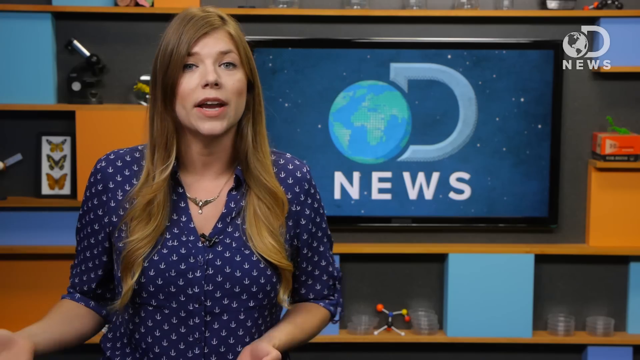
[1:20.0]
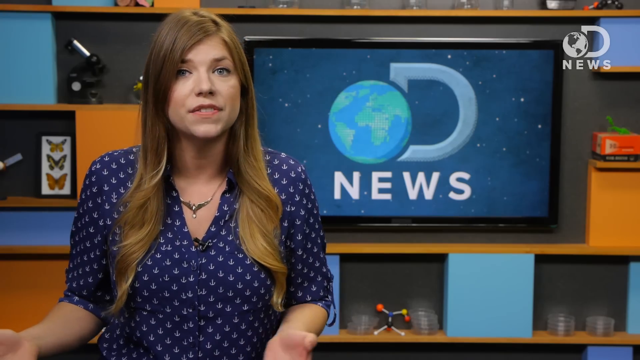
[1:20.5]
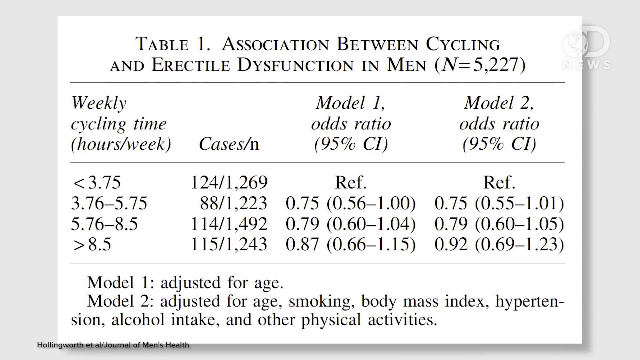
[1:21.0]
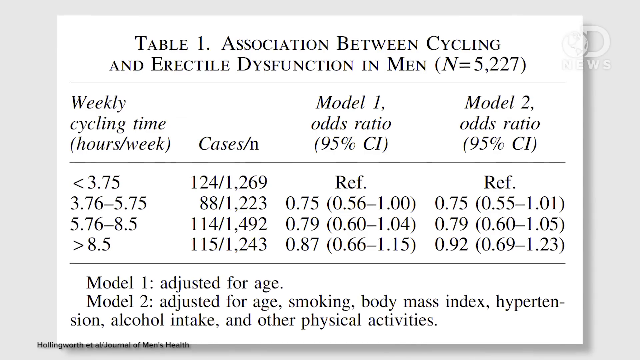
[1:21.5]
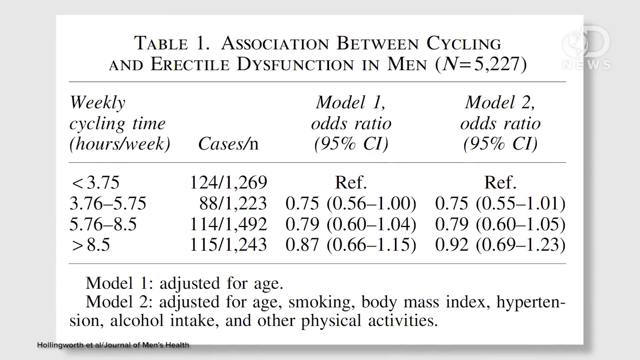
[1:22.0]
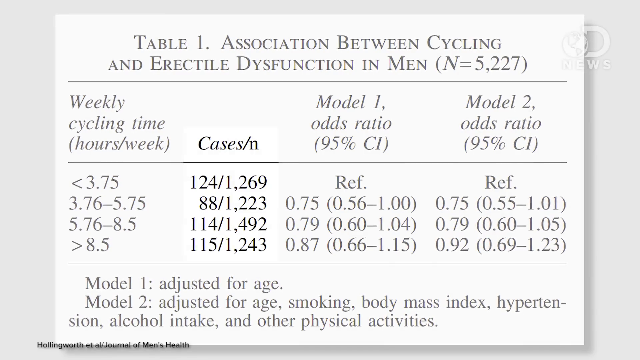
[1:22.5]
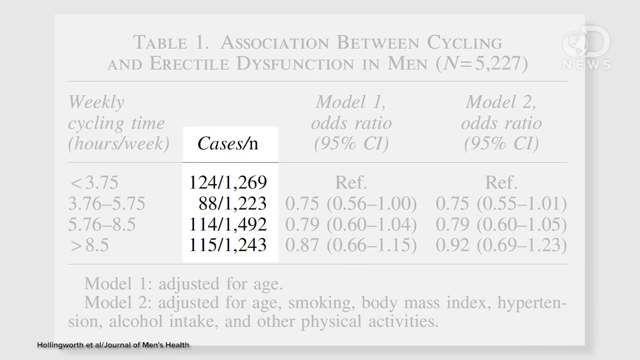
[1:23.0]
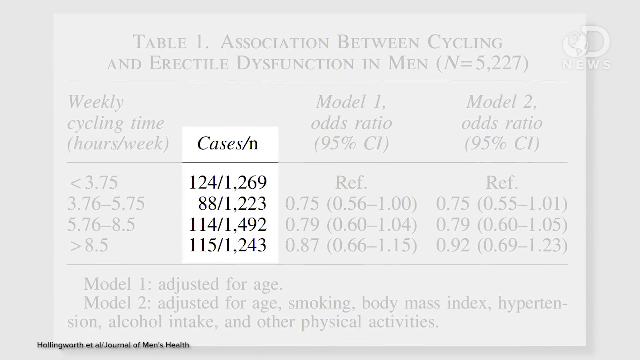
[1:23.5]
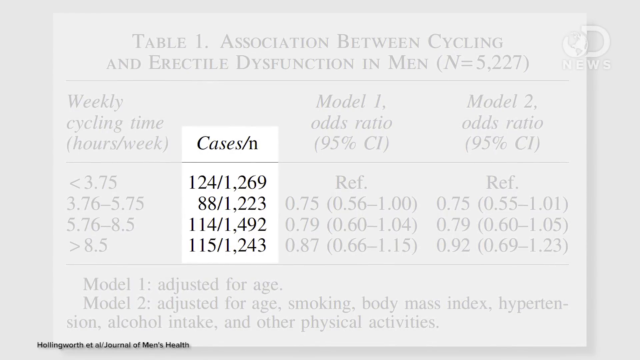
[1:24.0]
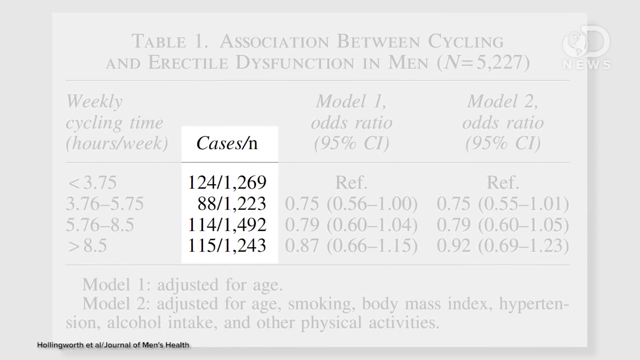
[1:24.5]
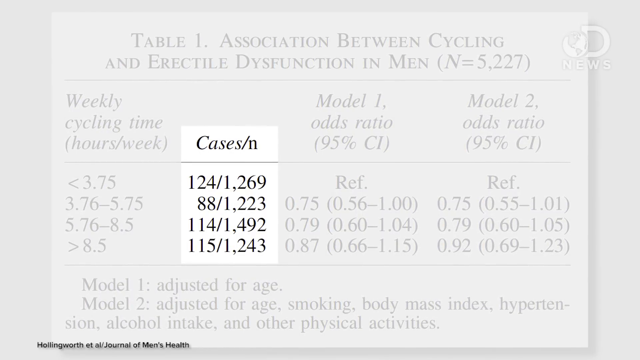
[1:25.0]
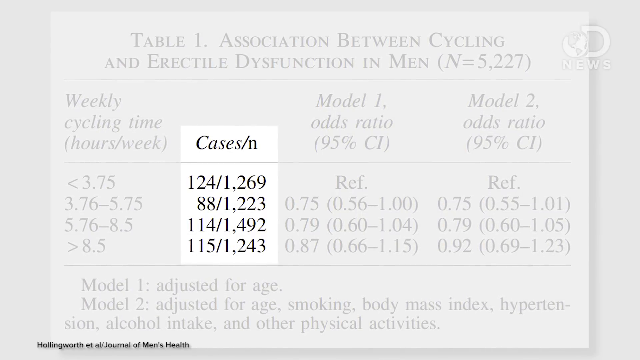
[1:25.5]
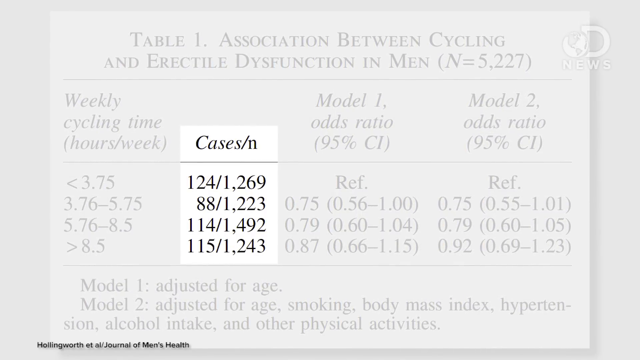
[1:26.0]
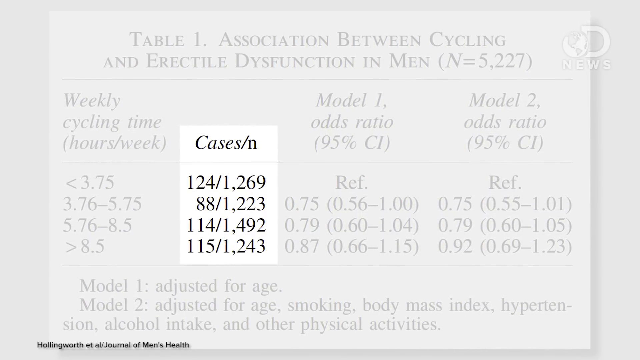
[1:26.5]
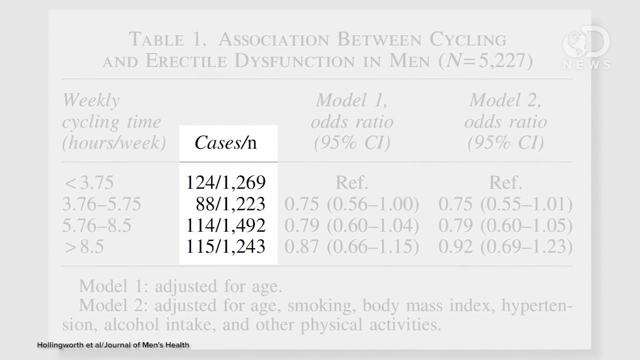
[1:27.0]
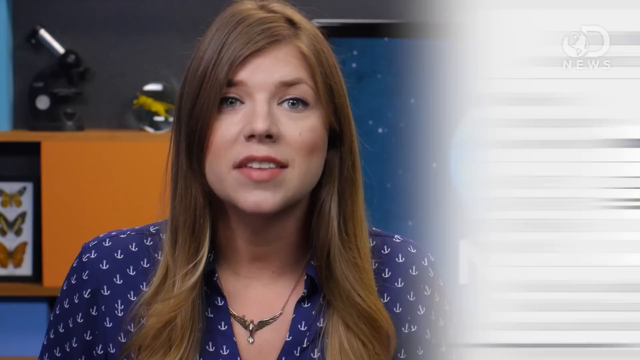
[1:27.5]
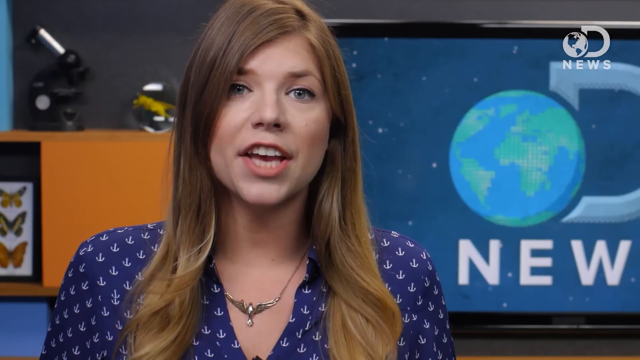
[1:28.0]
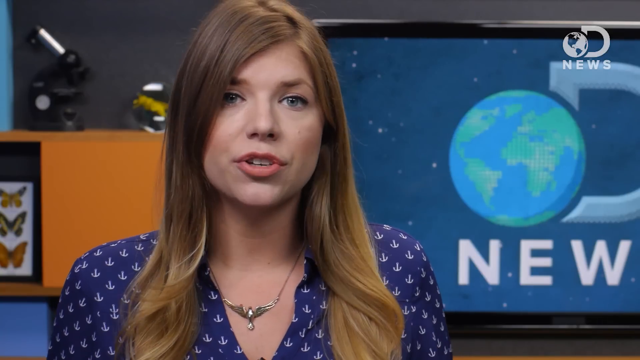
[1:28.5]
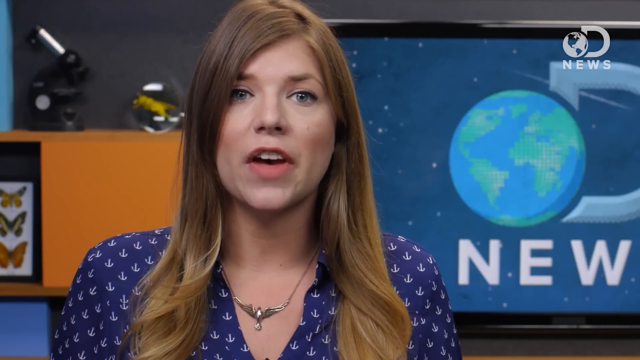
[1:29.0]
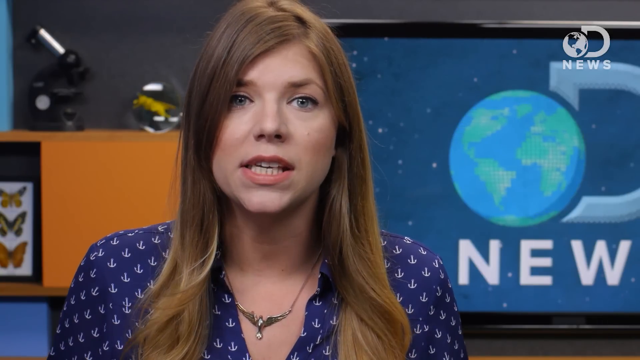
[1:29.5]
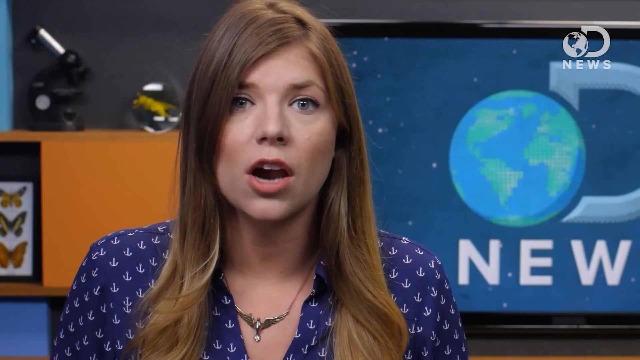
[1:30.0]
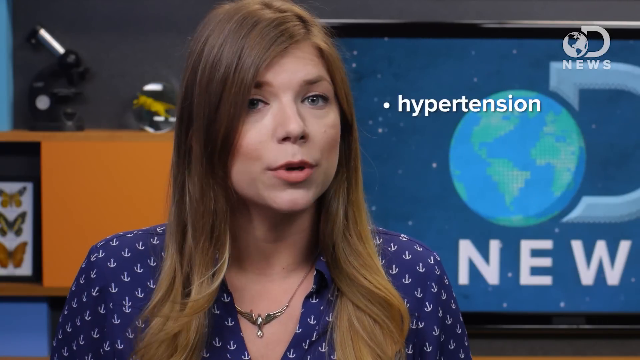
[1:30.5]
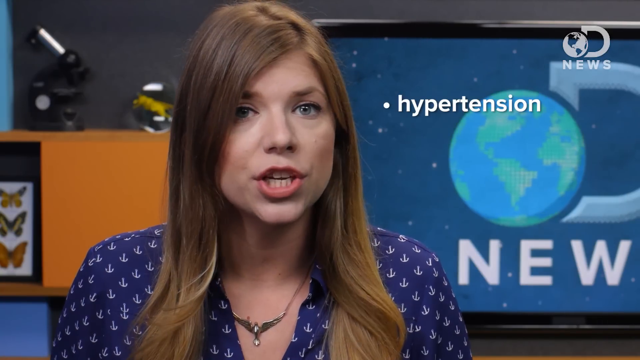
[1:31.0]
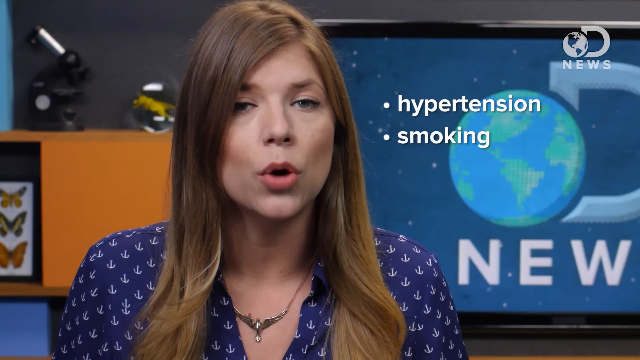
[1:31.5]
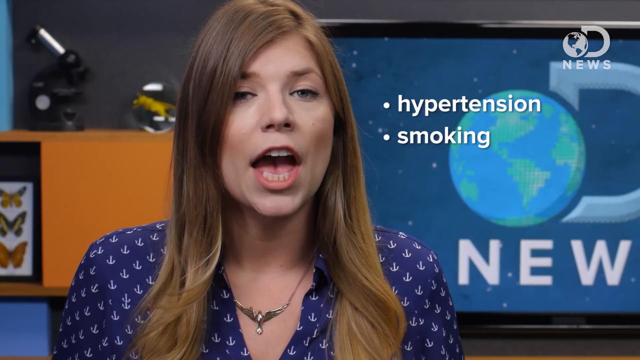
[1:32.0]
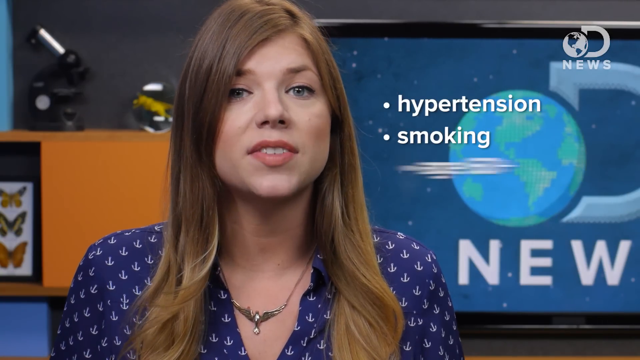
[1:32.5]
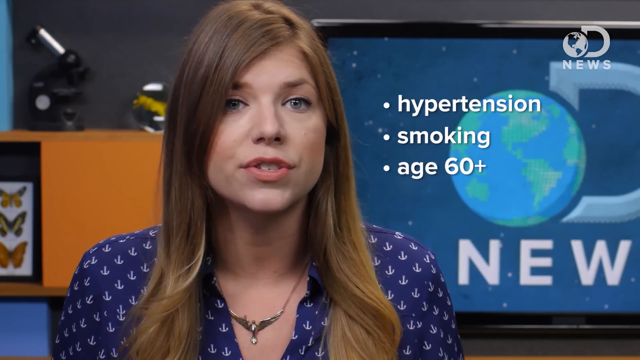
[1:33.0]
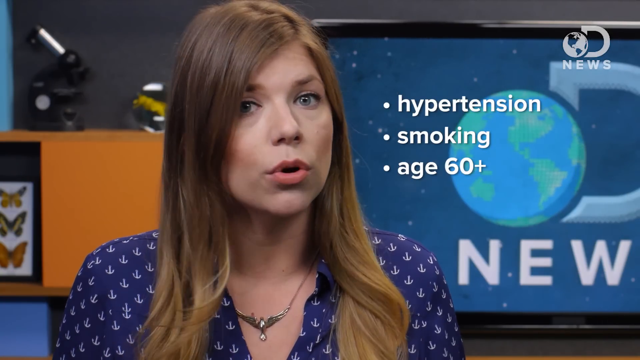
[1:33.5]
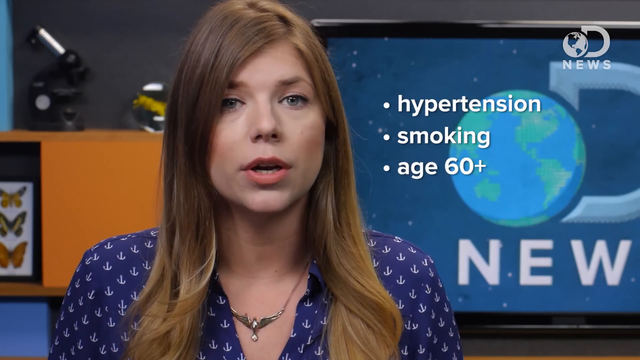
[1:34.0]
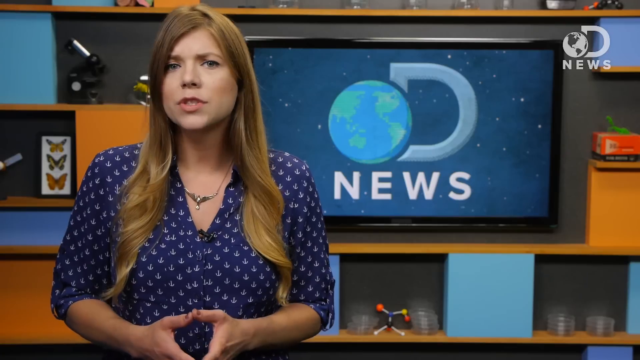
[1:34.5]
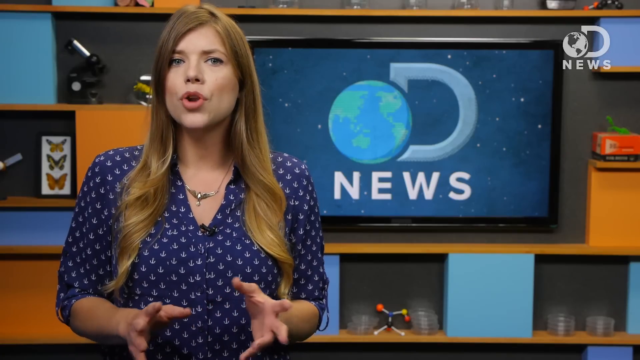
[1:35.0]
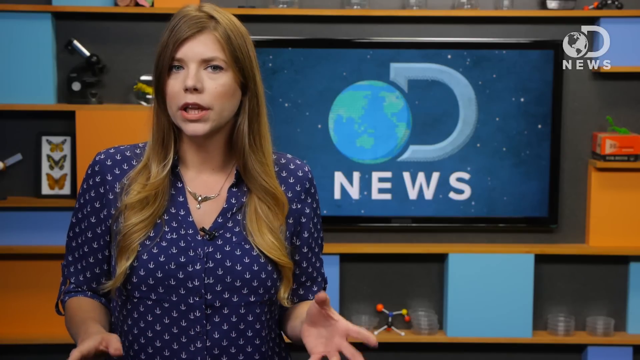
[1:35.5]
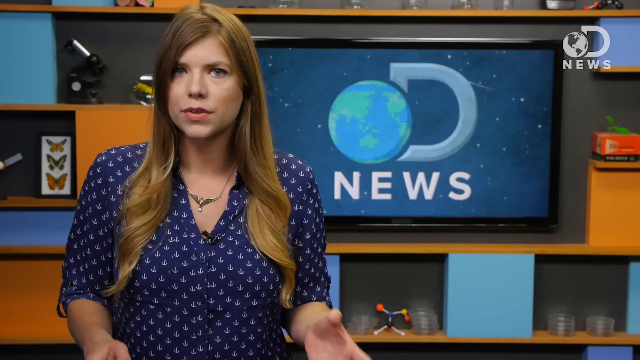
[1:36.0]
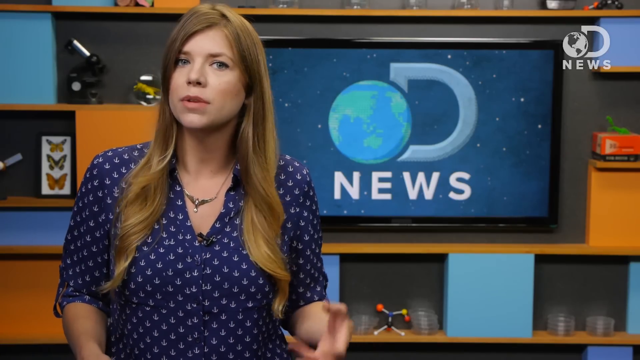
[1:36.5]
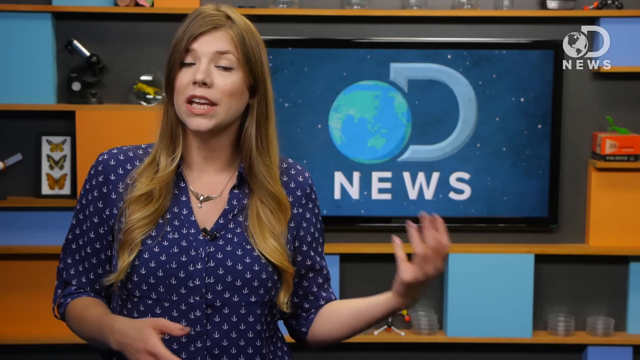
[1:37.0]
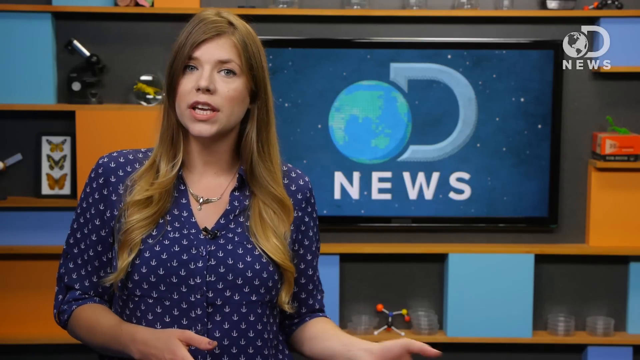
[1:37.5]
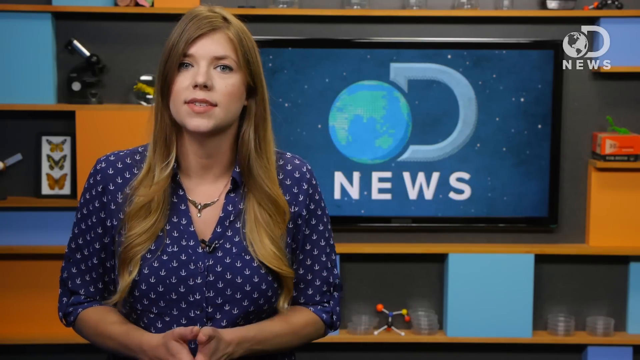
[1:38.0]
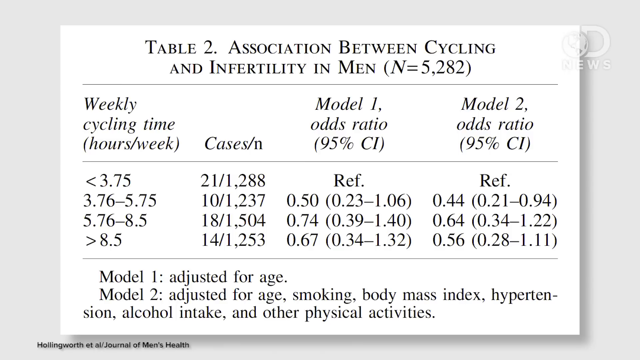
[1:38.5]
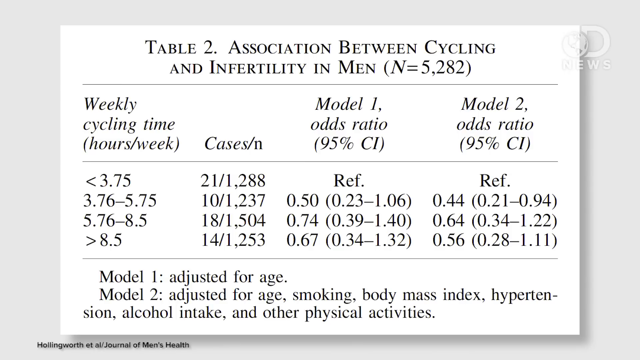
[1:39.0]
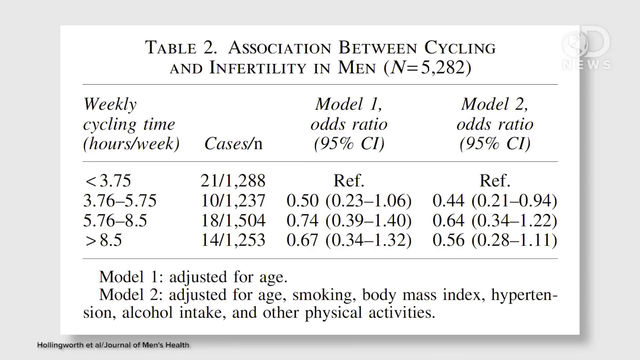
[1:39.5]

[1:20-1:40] The woman wears a blue shirt with some white logos on it. Behind her there appears to be the screen showing Discovery News, with the Earth icon and the D in News, and there appear to be black and blue colours. Table 1 appears: "Association between cycling and erectile dysfunction in men", with columns for weekly cycling time in hours per week, cases, and model 1 and model 2 odds ratios with 95% CI. Model 1 is adjusted for age; model 2 is adjusted for age, smoking, body mass index, hypertension, alcohol intake and other physical activities. The table has different numbers, and the cases per N column is highlighted: 124/1,269, 88/1,223, 114/1,492 and 115/1,243. The woman talks and says hypertension, smoking, age 60 plus, waving her hands around and rolling them over to the right. Table 2 then begins.